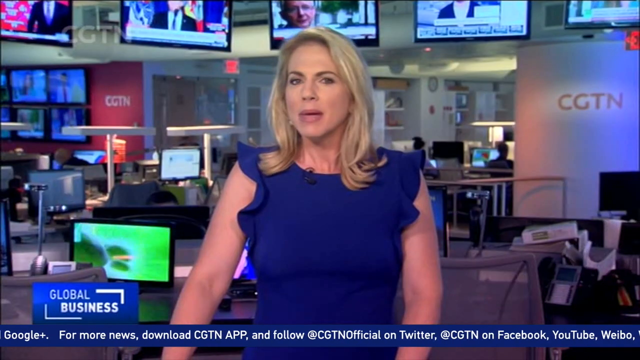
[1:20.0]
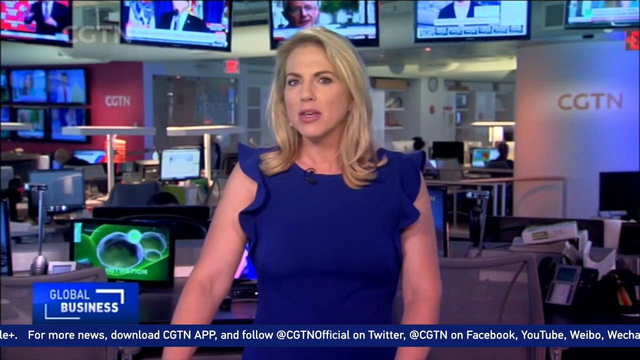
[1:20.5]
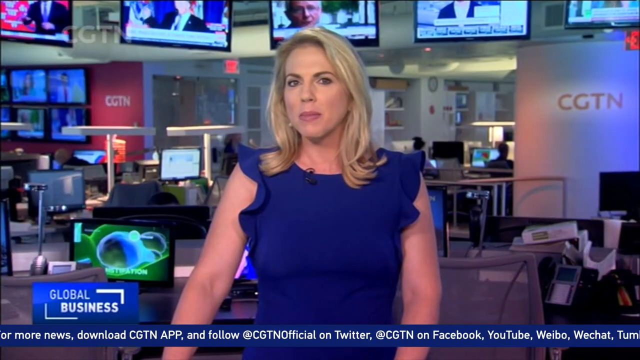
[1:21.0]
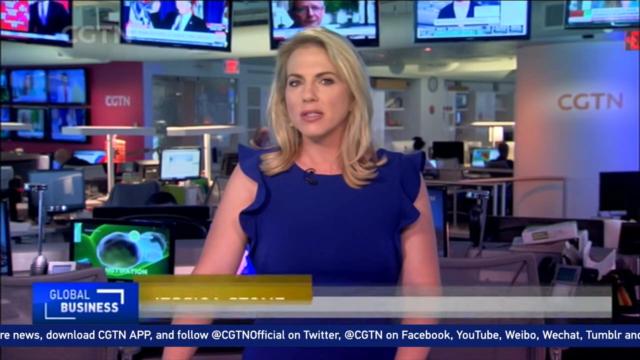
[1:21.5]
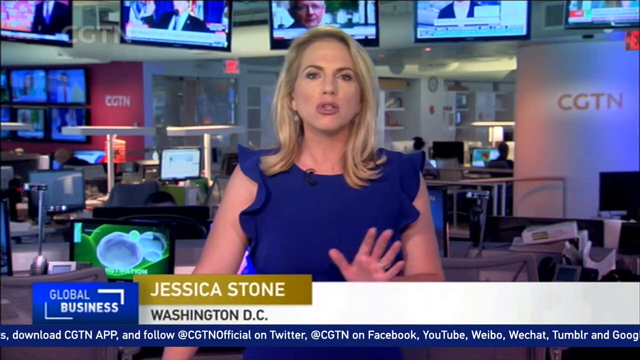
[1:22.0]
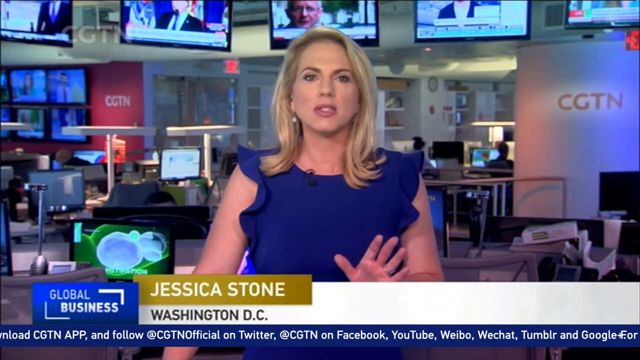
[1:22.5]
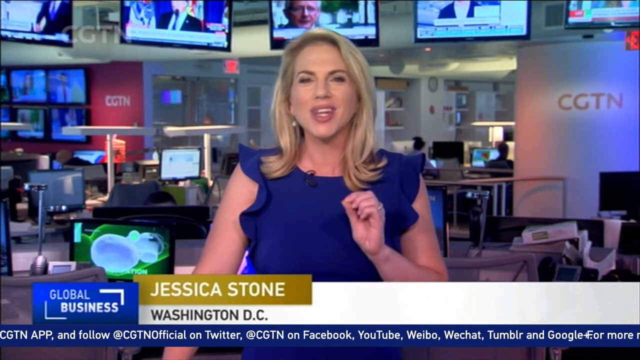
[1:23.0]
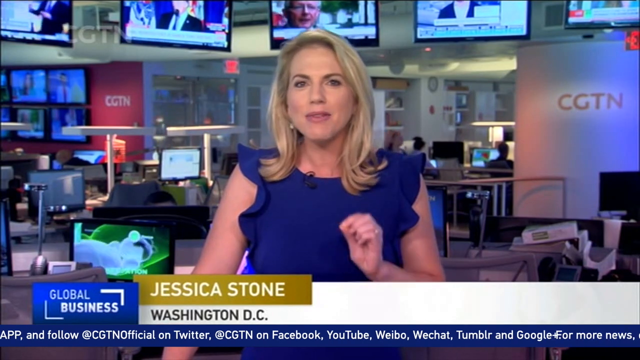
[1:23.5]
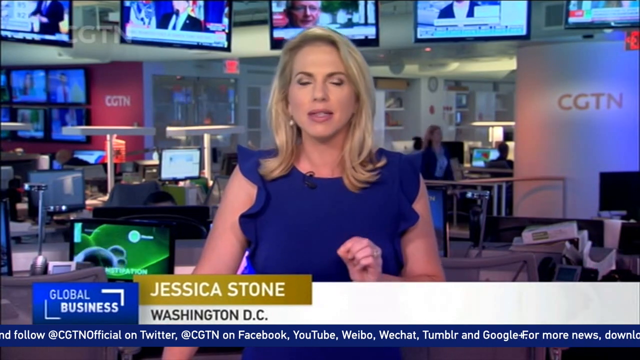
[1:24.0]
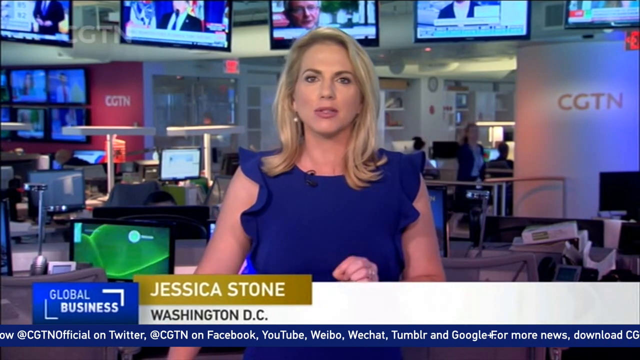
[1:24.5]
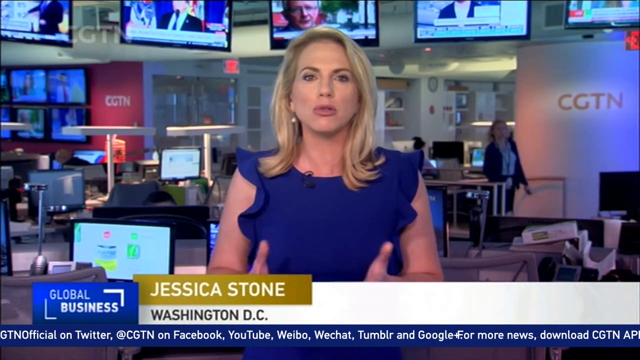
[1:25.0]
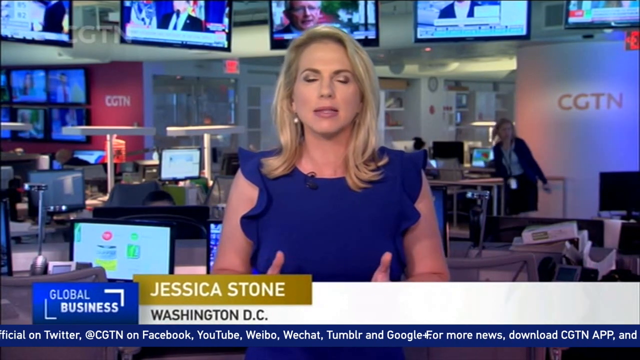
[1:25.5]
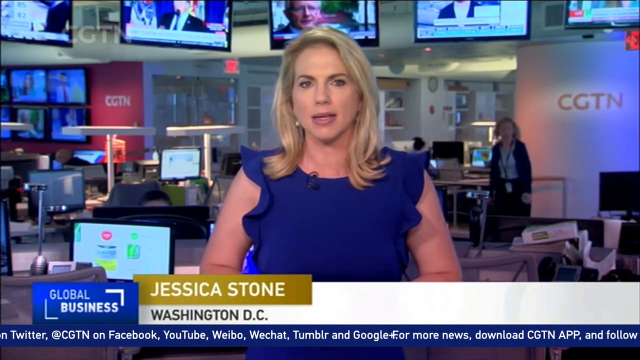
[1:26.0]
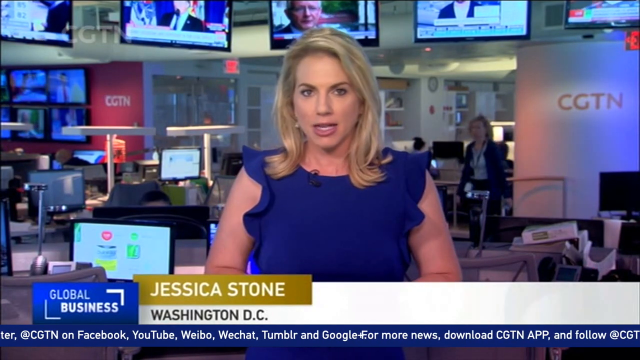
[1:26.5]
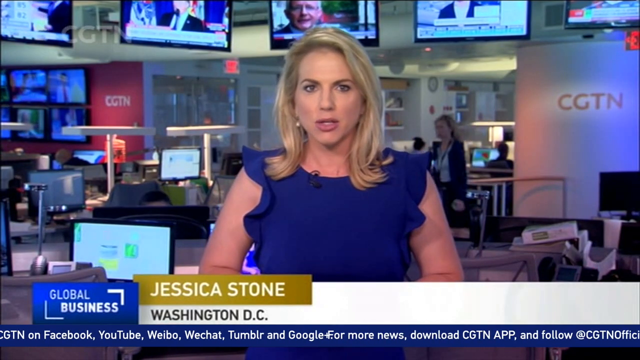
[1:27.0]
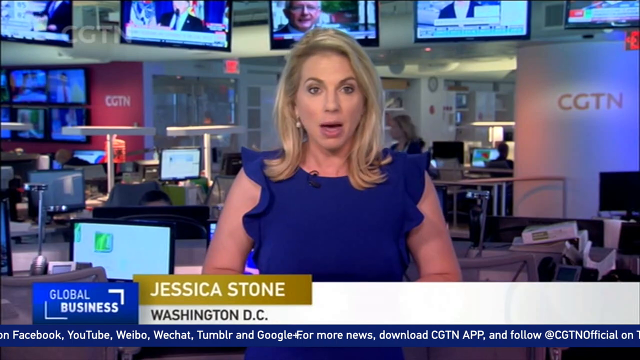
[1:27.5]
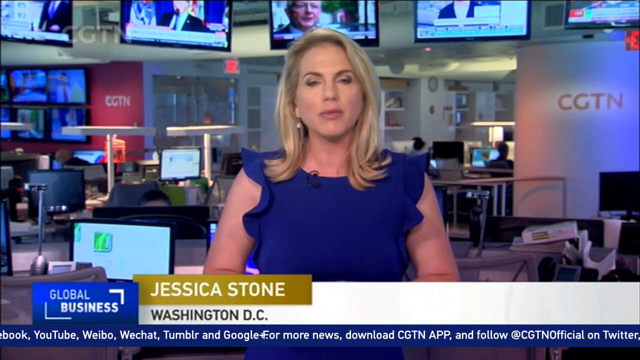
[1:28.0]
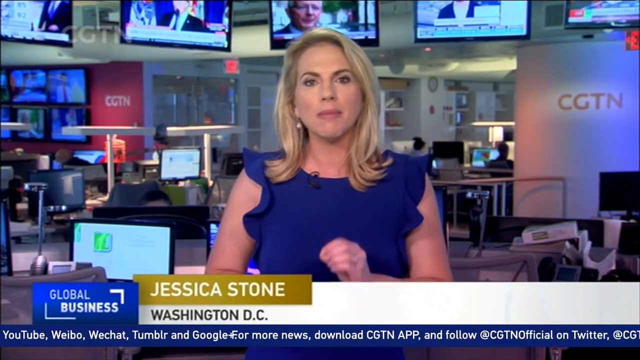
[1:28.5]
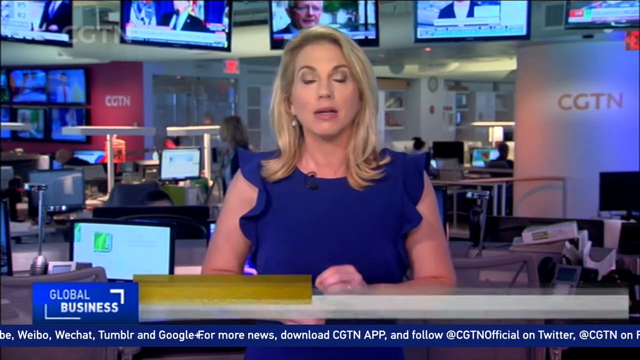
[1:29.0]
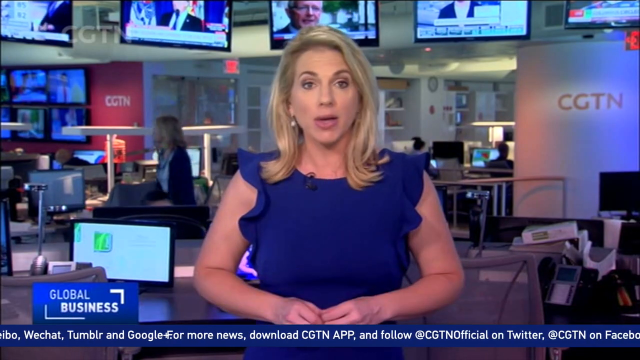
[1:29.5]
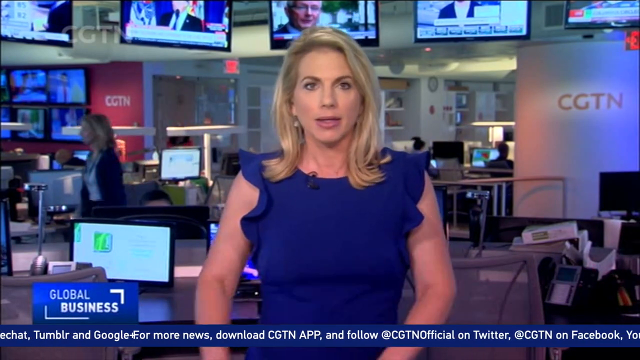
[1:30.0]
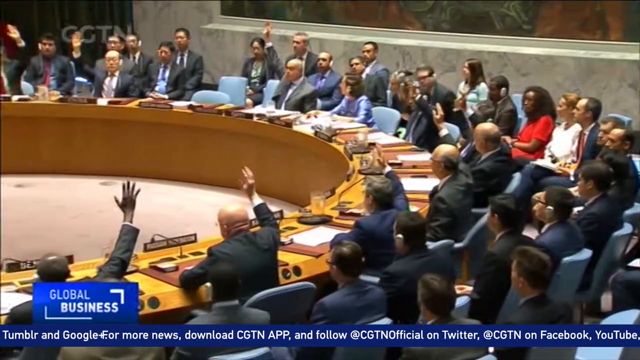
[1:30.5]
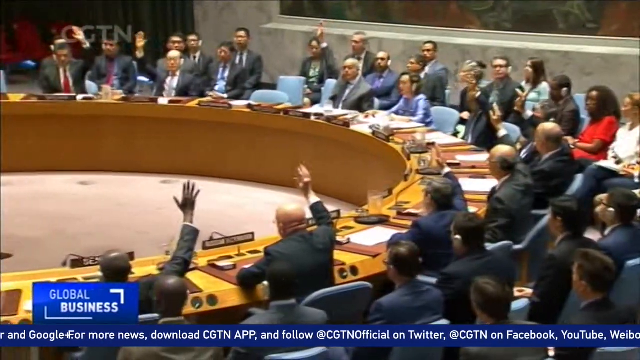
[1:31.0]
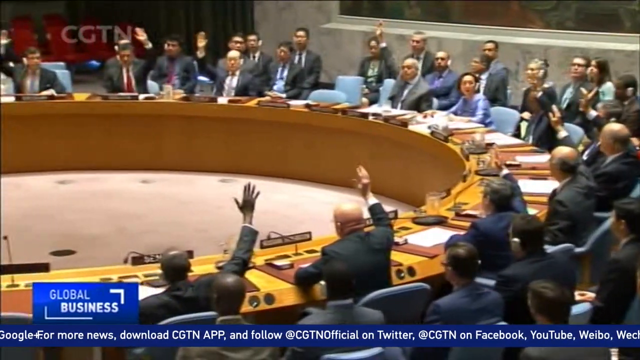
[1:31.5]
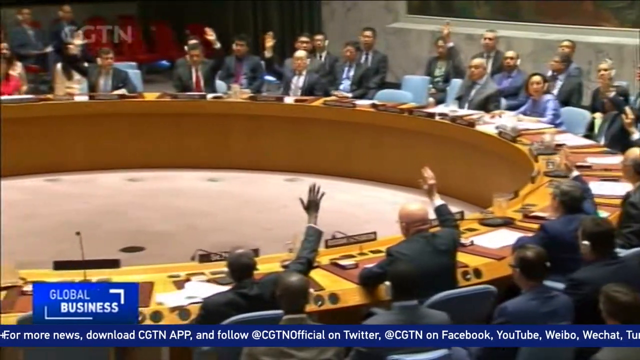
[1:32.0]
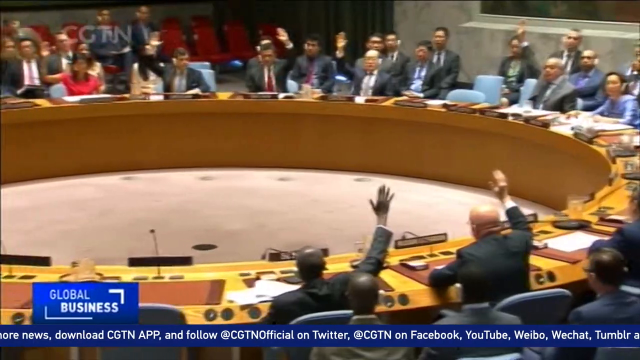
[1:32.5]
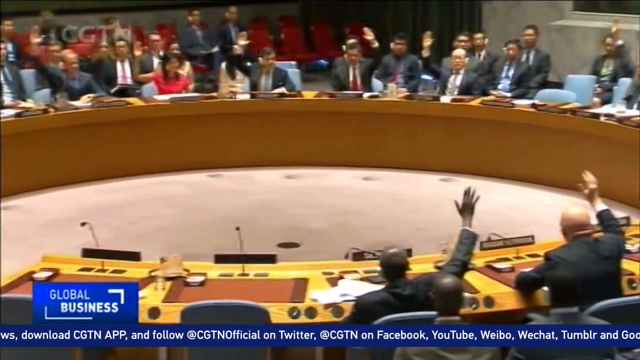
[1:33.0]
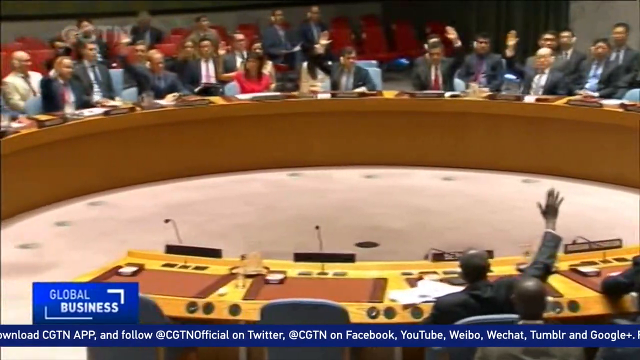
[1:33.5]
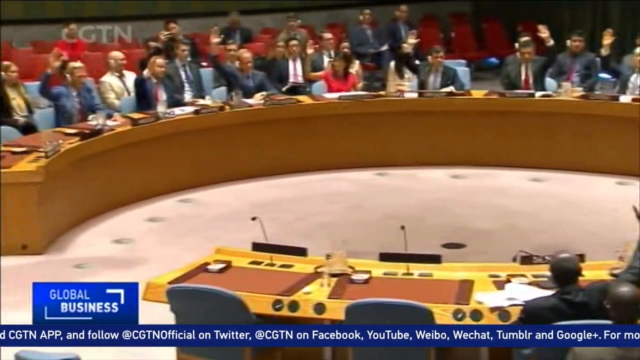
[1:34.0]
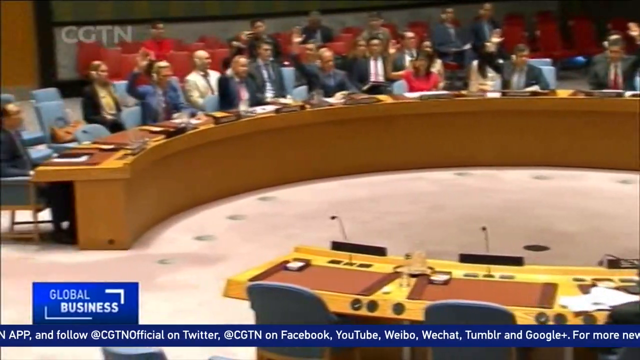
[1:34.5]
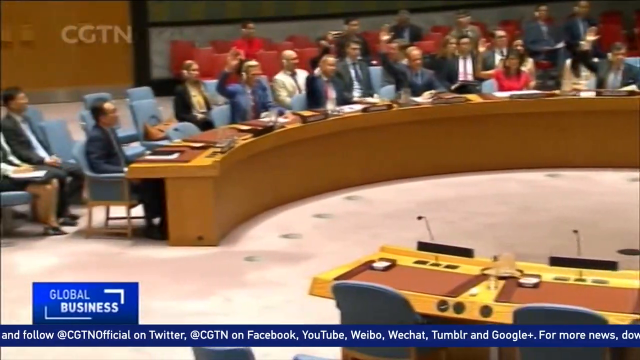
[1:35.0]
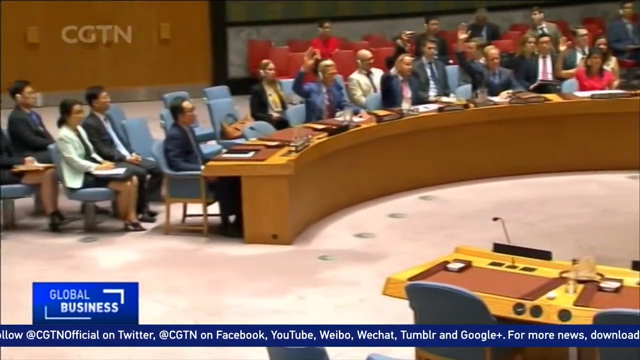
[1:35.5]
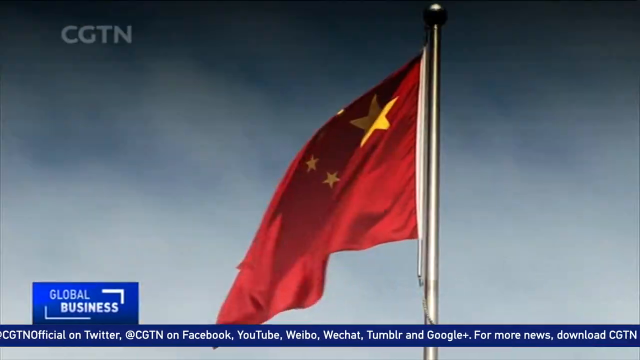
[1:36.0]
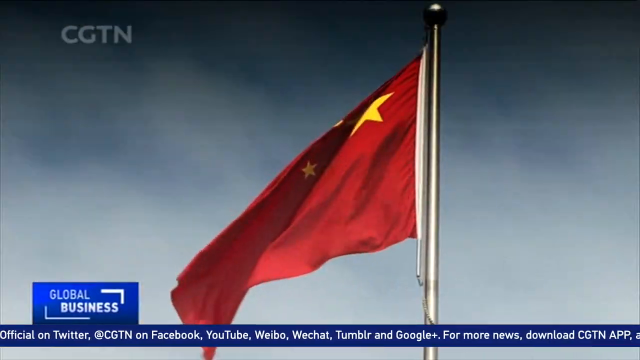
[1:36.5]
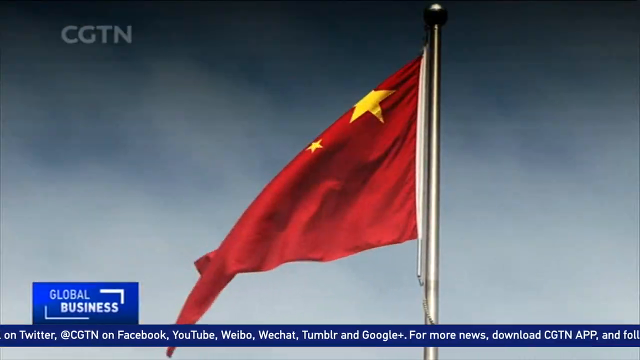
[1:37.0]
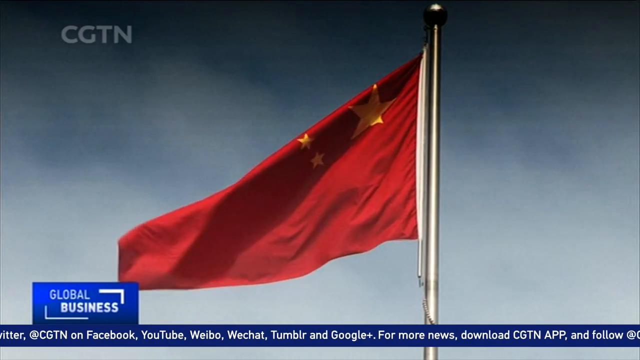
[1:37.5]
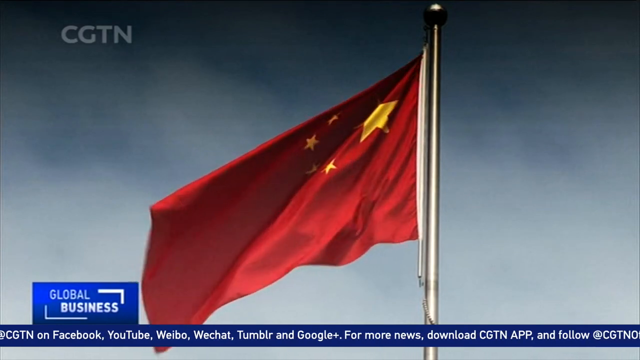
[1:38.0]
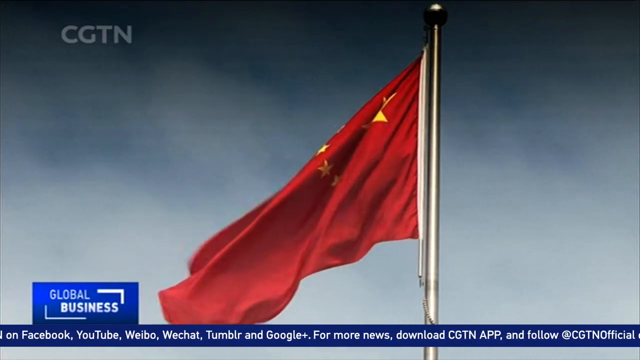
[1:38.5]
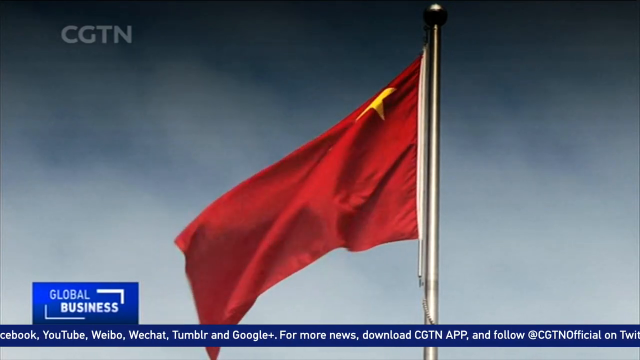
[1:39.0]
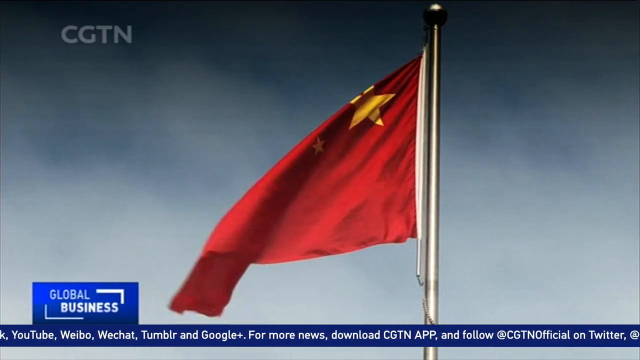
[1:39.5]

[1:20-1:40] A news correspondent appears in the CGTN newsroom, with several displays hanging from the wall, desks, and individuals on their laptops in the background. She is a white woman with shoulder-length blonde hair wearing a royal blue ruffled dress. She is Jennifer Stone, and the text underneath reads "Washington DC", placing her in Washington DC. The camera then cuts to a large room with several individuals, several of whom have their arms raised, whether to ask to speak or to show agreement is unclear. The camera then cuts to an image of a red flag with golden yellow stars, apparently the flag of China.